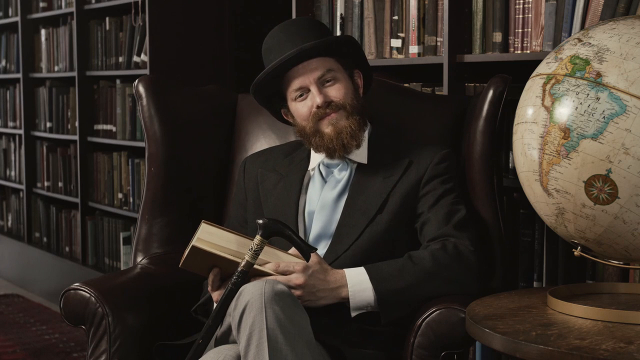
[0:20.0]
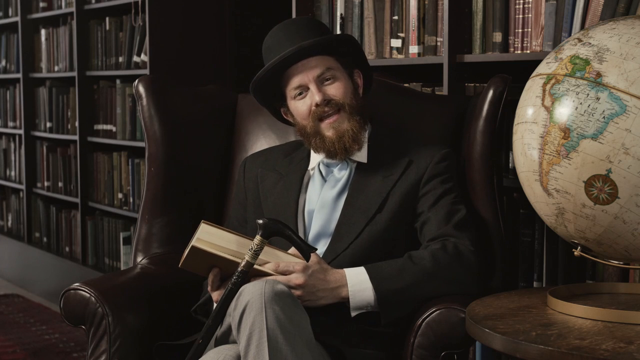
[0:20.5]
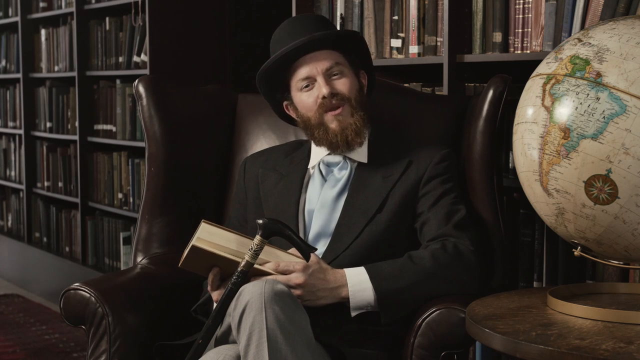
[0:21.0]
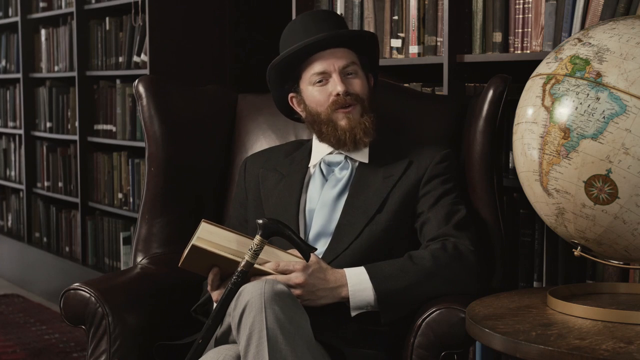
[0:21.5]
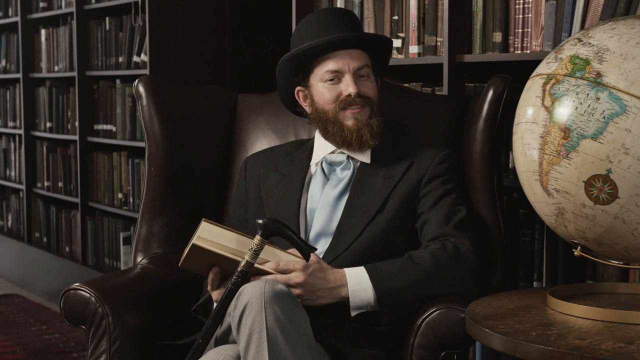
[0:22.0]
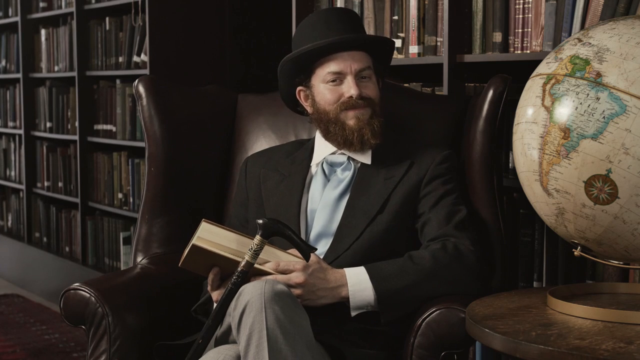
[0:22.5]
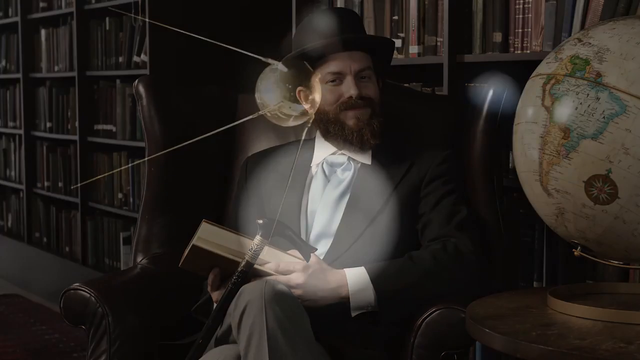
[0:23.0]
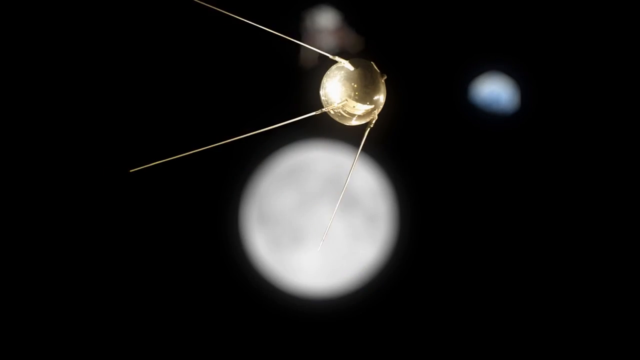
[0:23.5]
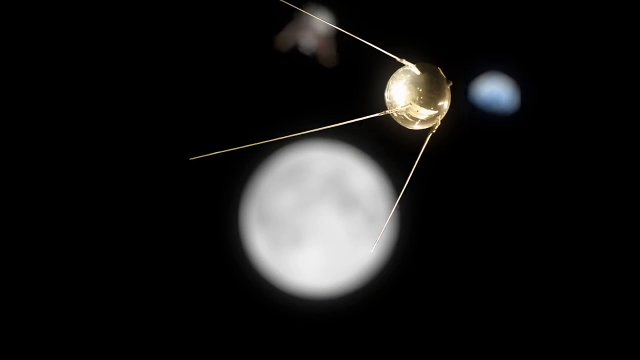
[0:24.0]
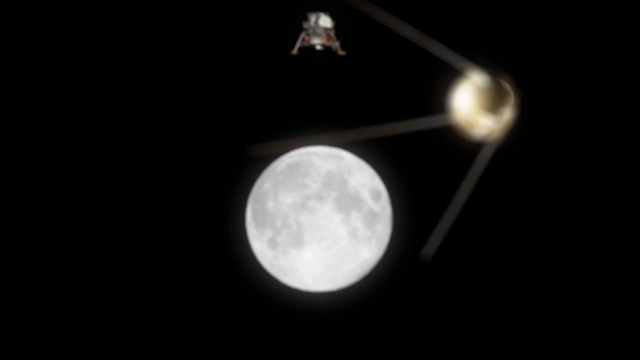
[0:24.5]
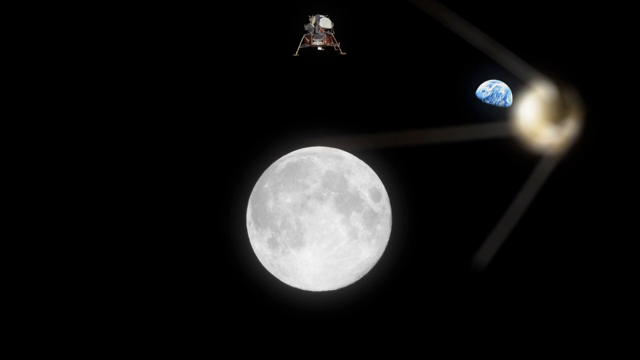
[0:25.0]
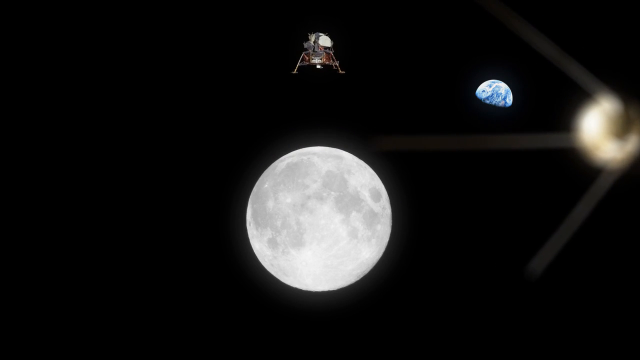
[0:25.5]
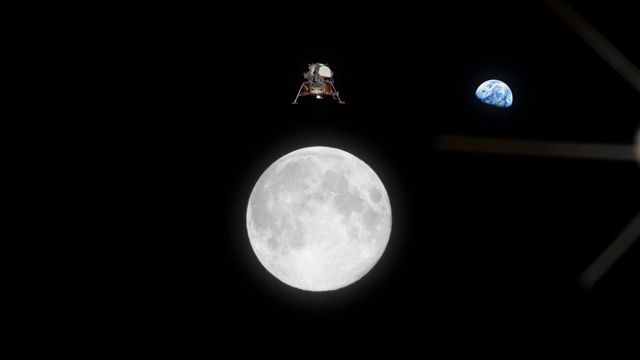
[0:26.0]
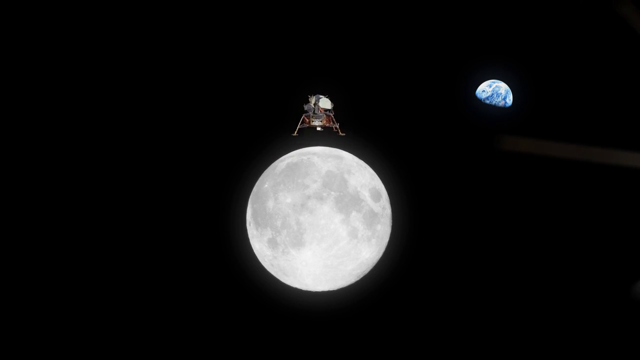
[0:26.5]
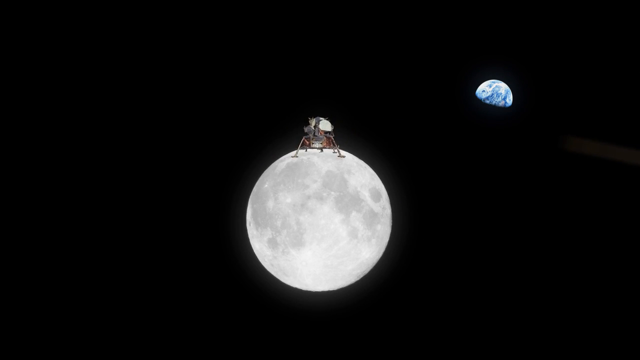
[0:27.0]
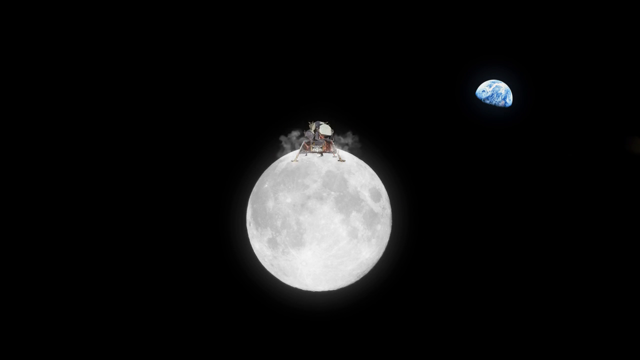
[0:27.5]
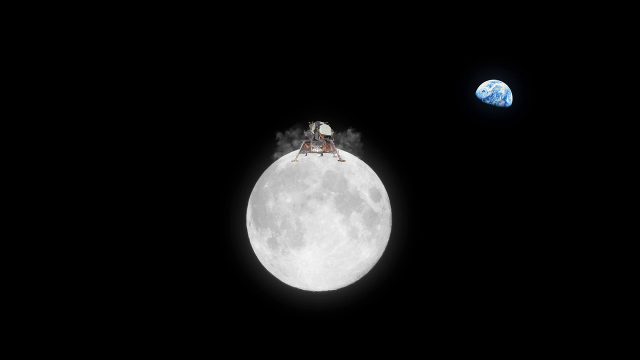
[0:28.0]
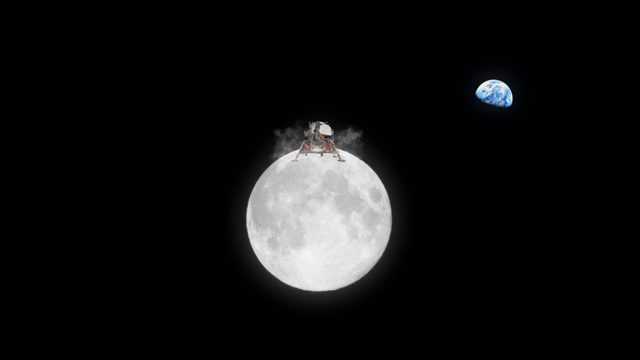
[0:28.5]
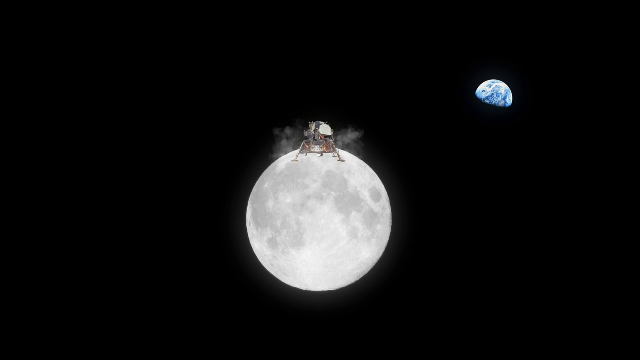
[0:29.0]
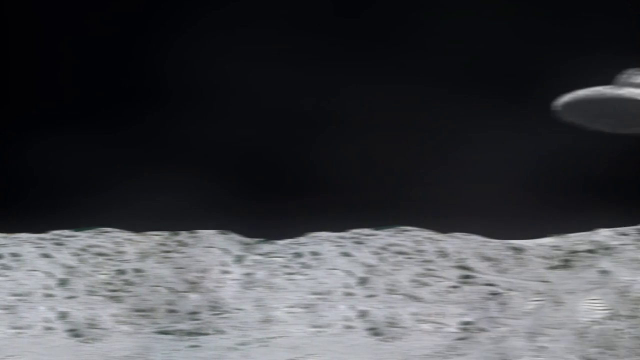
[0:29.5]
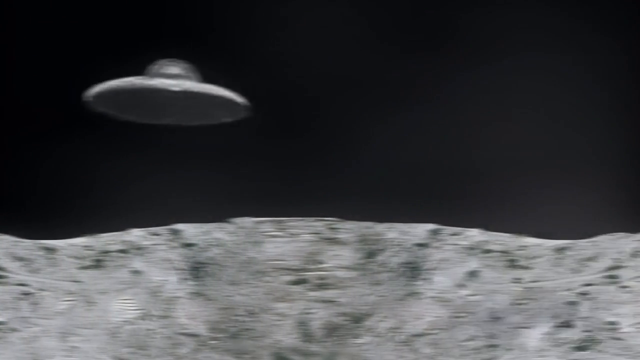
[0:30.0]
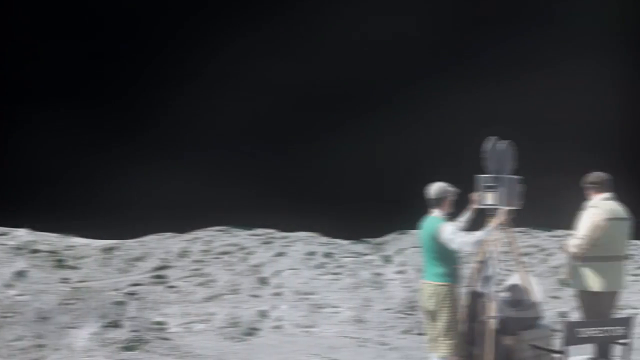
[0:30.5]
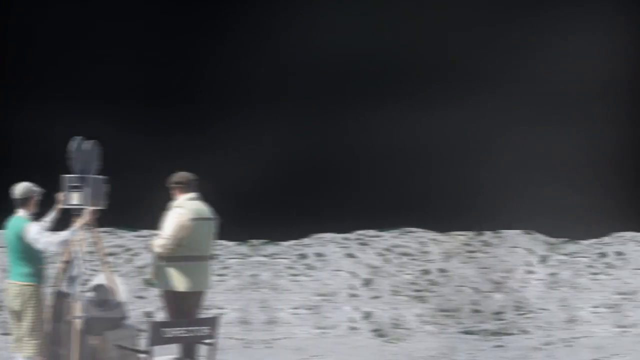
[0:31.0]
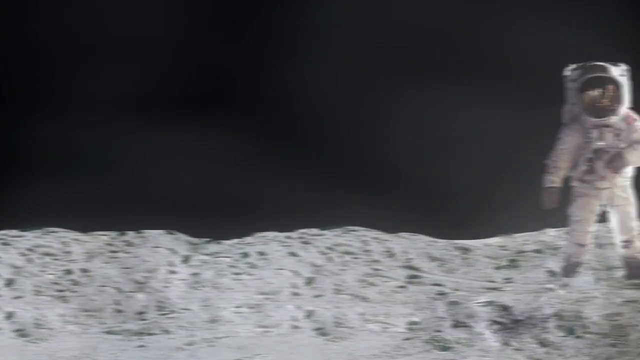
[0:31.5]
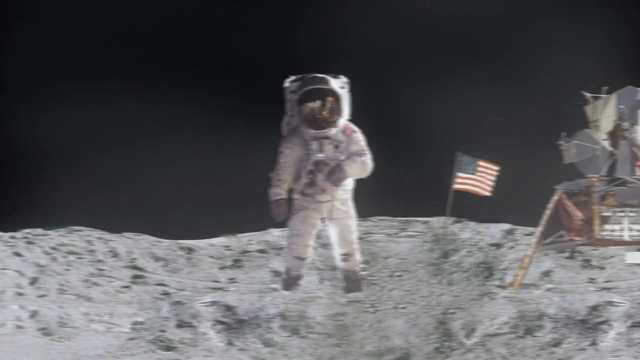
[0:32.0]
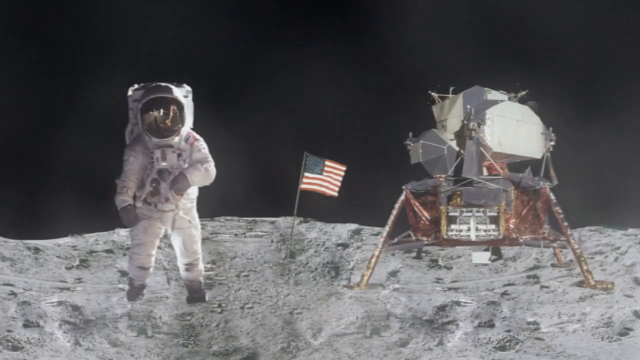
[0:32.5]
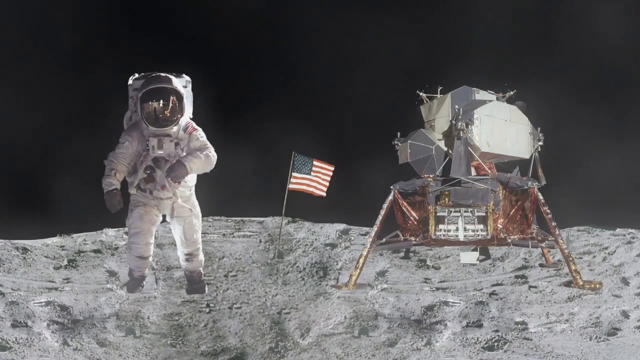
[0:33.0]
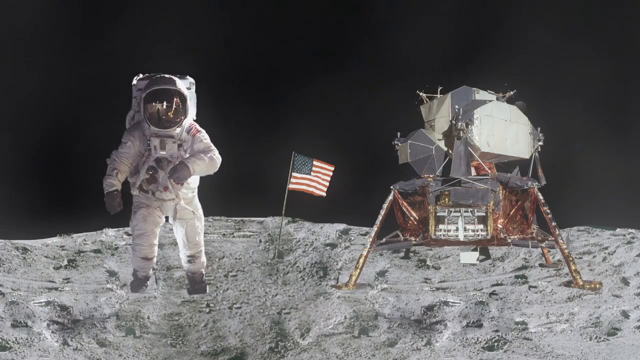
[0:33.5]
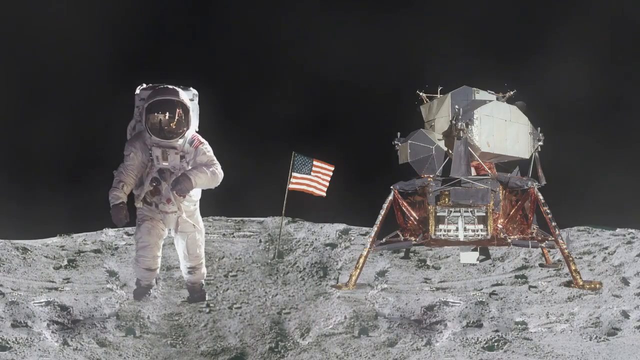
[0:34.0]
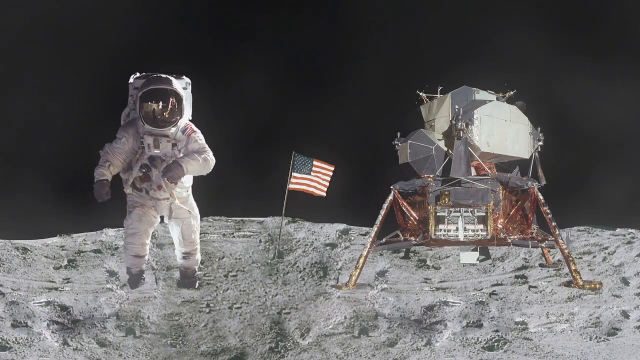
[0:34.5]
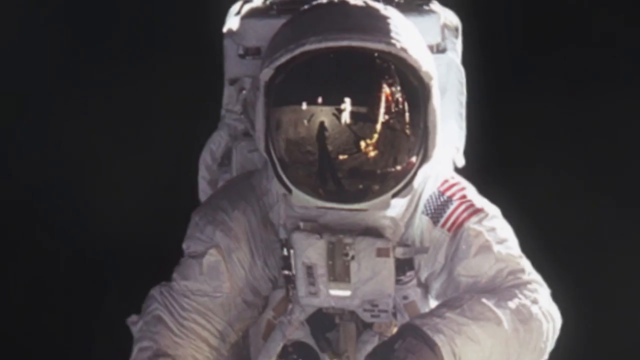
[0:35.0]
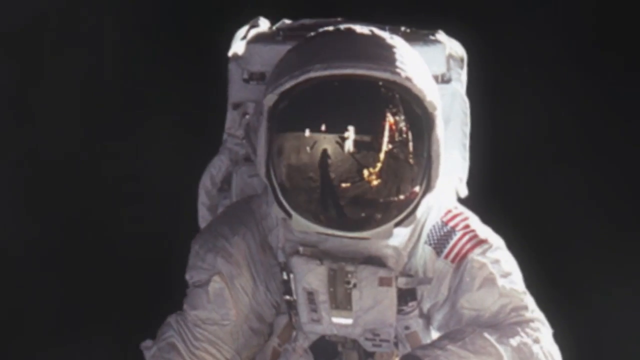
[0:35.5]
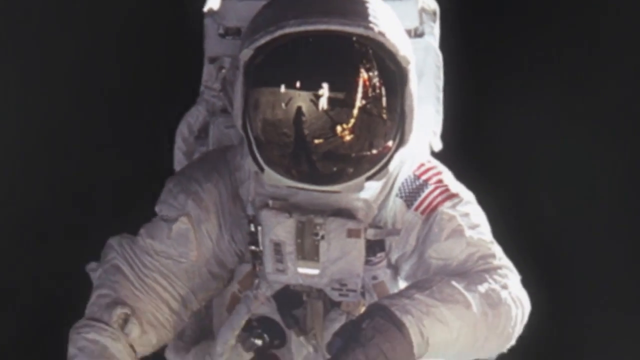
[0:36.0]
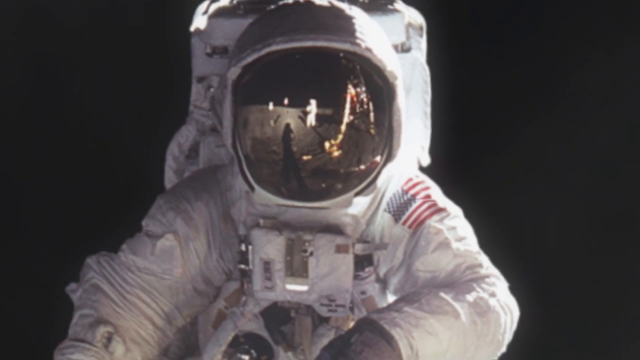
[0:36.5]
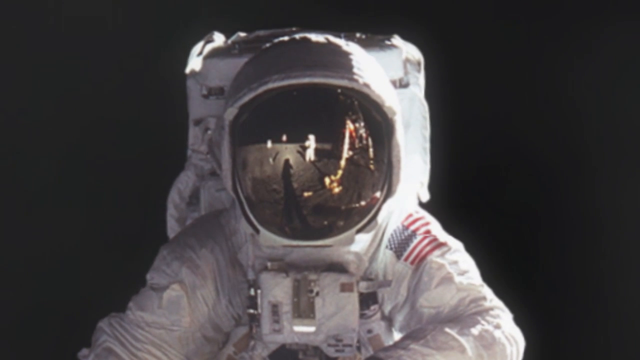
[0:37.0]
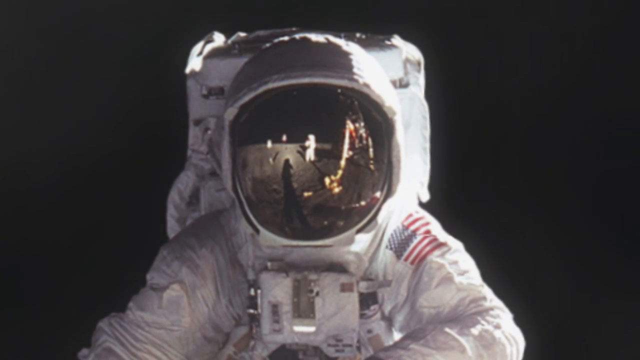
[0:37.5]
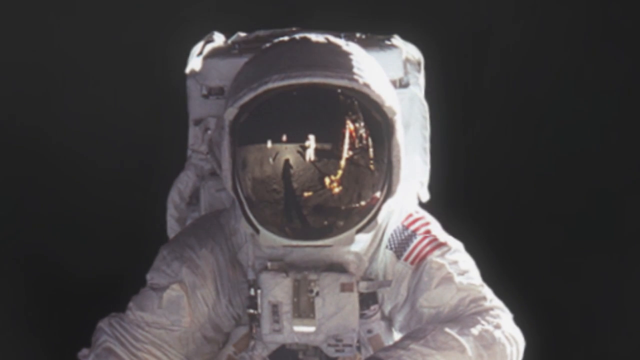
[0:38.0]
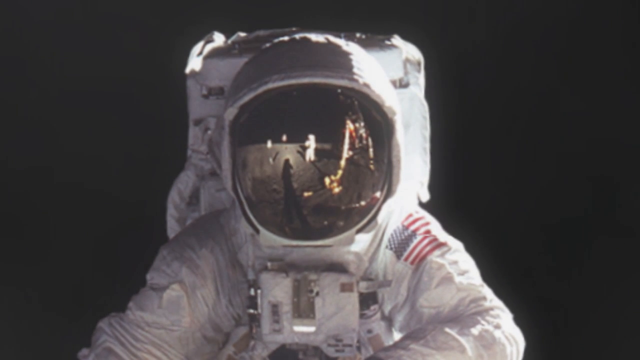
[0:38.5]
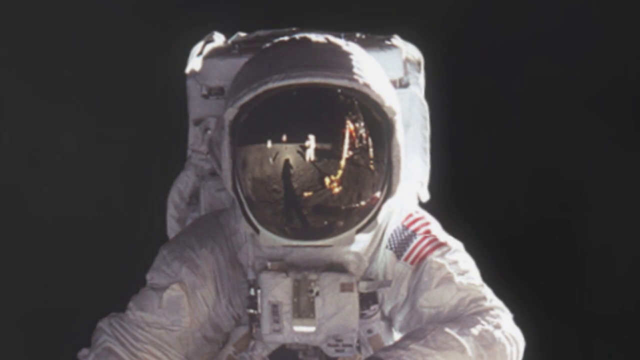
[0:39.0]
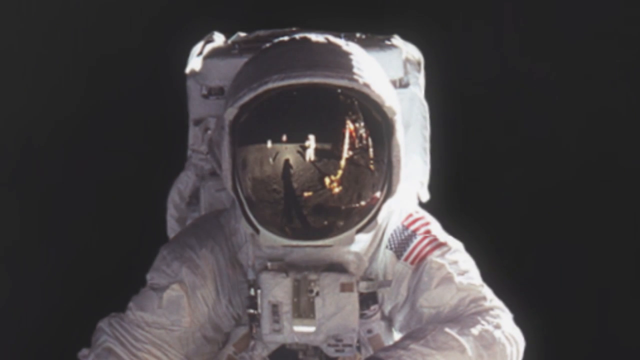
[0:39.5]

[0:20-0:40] To the right is what appears to be some kind of sphere, like a globe. At the center, someone wearing a black hat sits in a leather chair. He has a beard and angles his head, holds a book in both hands, and has a cane resting on his knee. He speaks, moving his head to the right as he talks, then looks at the camera and closes his lips. The scene transitions to an image of what appears to be a satellite of sorts, almost like the Russian Sputnik: a golden orb with a spiked antenna at the top left, a spiked antenna at the middle extending left, and a spiked antenna extending downwards. The object moves from the middle to the right. In the back there appears to be a lunar lander hovering above an image of a moon; it lowers and touches down onto the moon, and puffs of smoke appear below it, extending from left to right. The scene transitions to what appears to be the lunar surface. The camera moves from left to right with a blur of land behind, and an image of an unidentified flying object appears at the top.